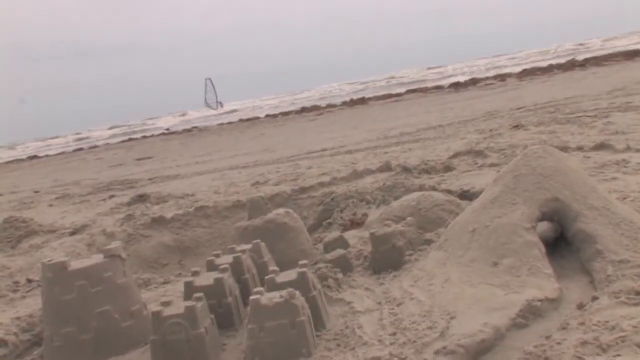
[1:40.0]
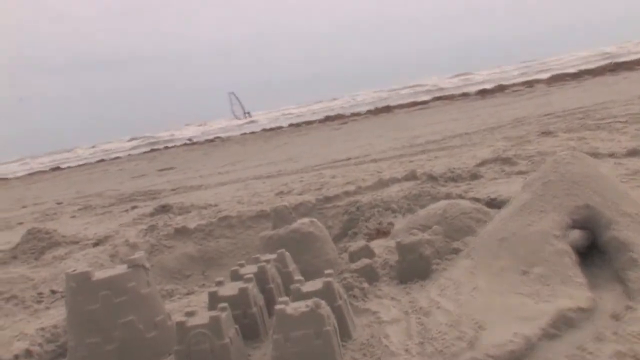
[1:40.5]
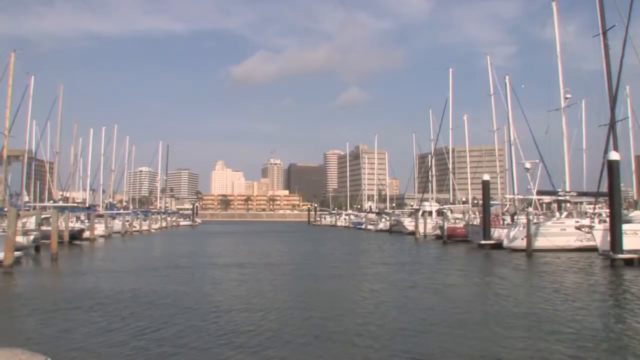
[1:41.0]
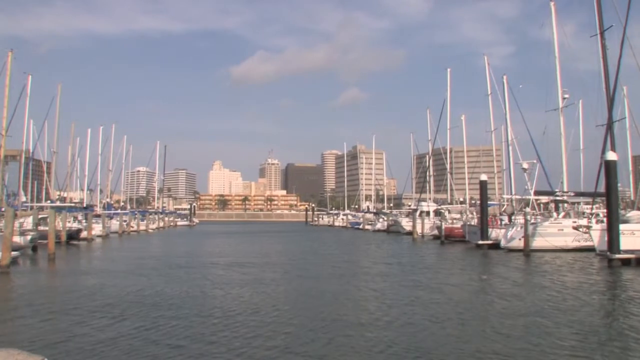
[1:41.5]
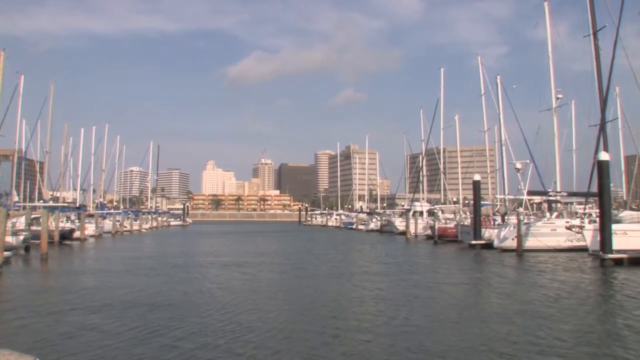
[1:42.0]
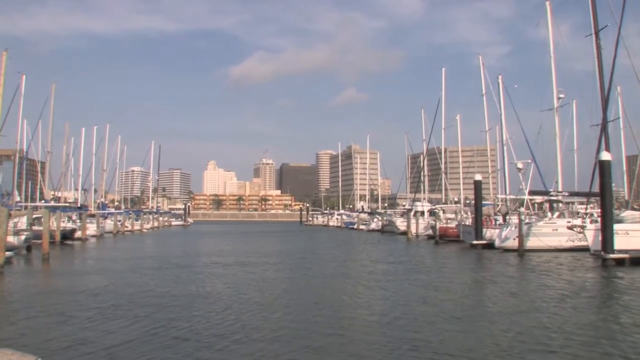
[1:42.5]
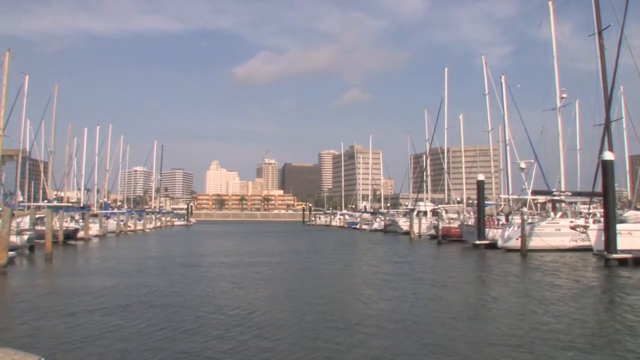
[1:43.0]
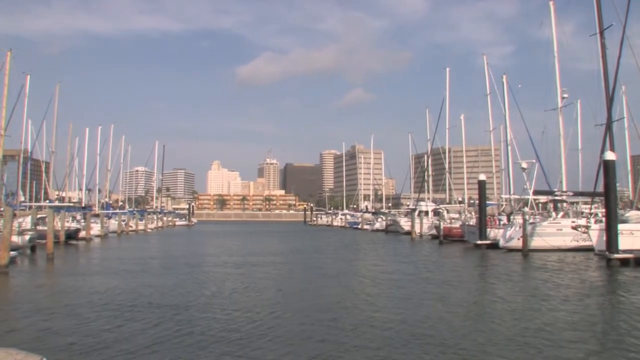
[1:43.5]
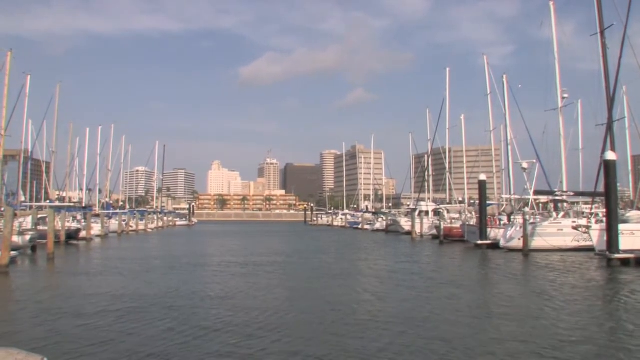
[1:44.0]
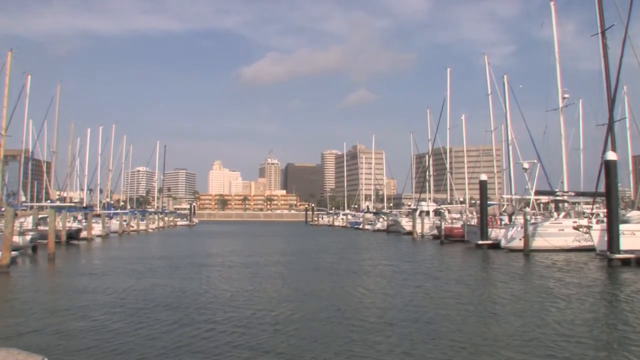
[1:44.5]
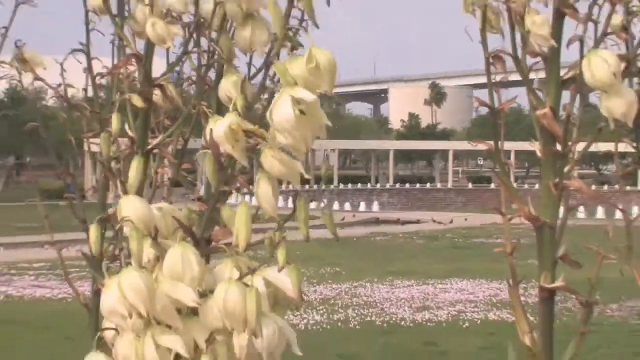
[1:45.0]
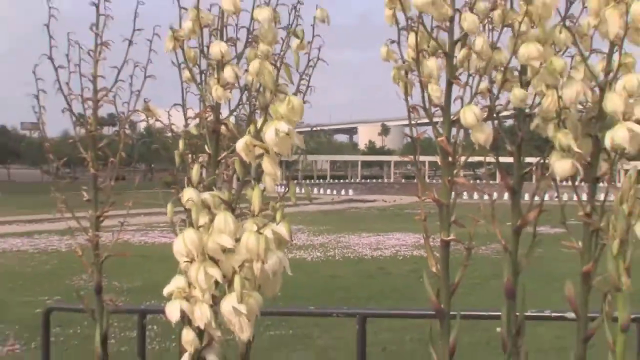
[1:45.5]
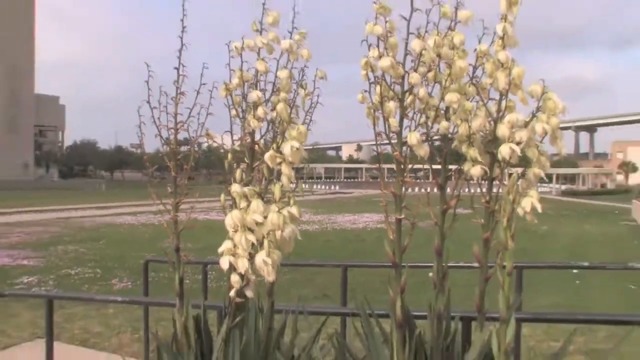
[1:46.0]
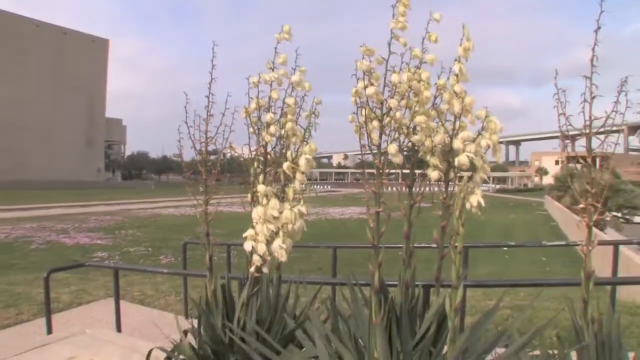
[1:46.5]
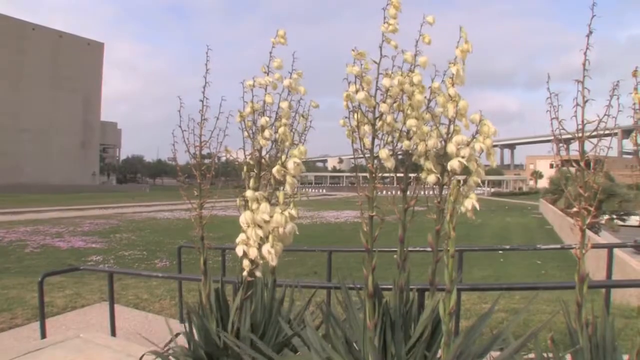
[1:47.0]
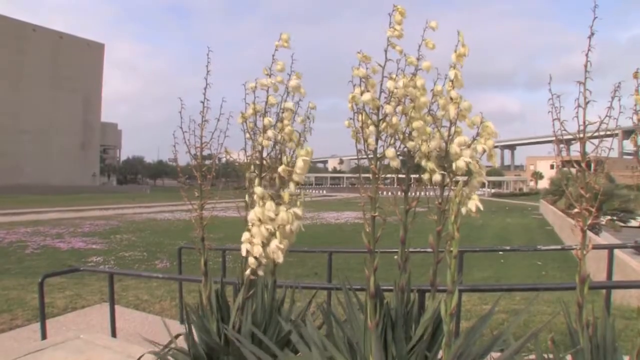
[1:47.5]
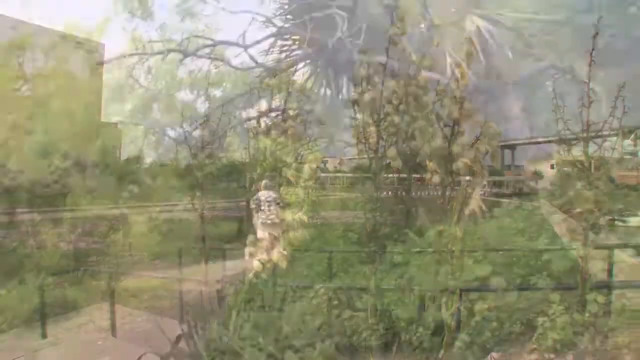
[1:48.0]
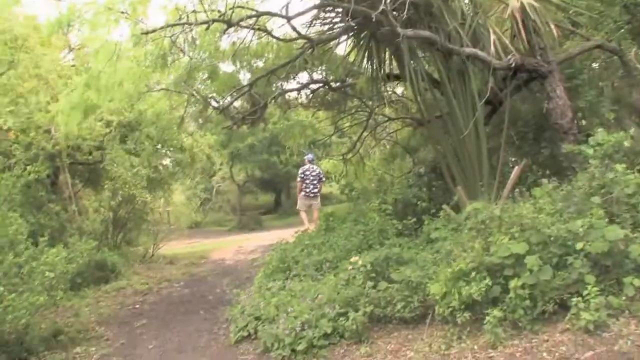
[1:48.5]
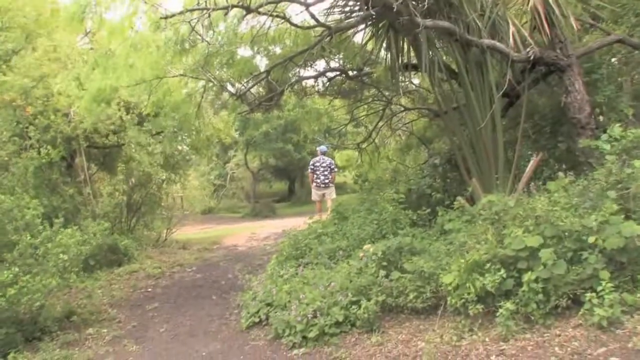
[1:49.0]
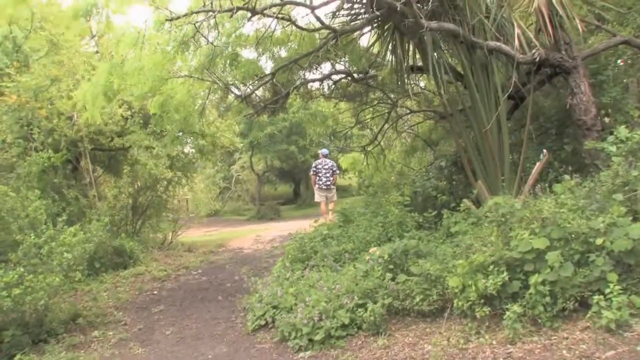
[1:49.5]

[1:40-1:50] A beach scene with a sandcastle is in the foreground; in the background are ocean waves and a person on a sailboard. Then a bay appears, with water in the middle and sailboats on the left and right sides; all the masts are up, but there are no sails on the boats. In the background are a cityscape and a blue sky with white clouds. The scene switches to some flowers and a man walking away from the camera, apparently out in a forest with a lot of greenery around him. He has both hands in his pockets.